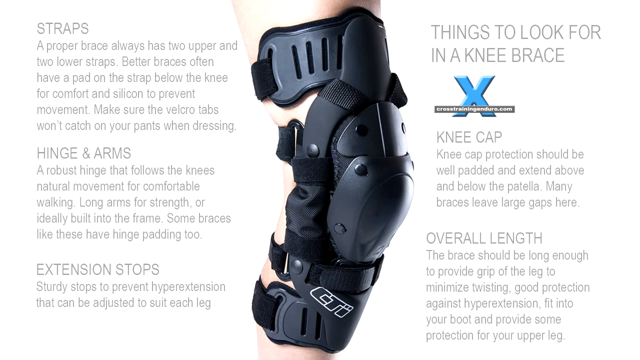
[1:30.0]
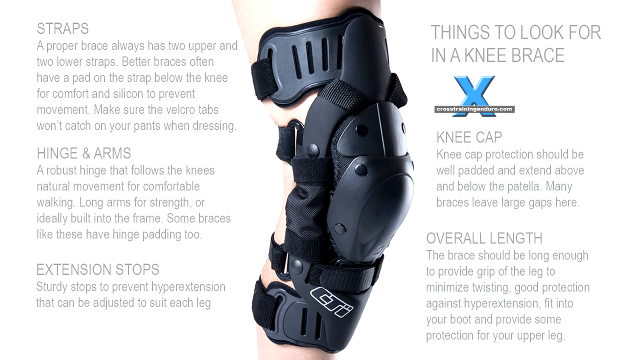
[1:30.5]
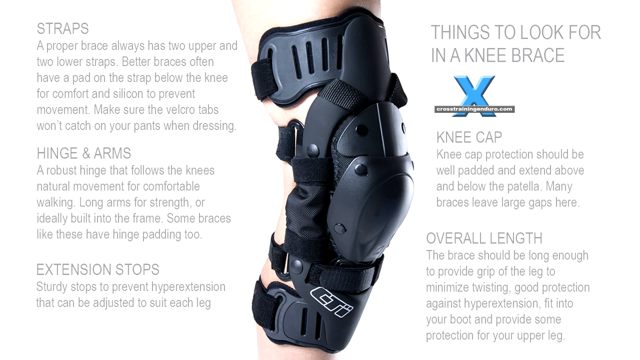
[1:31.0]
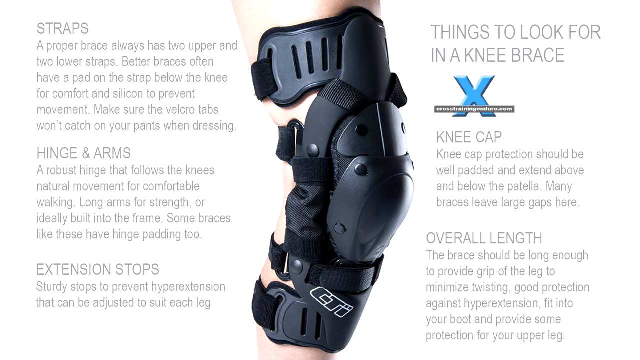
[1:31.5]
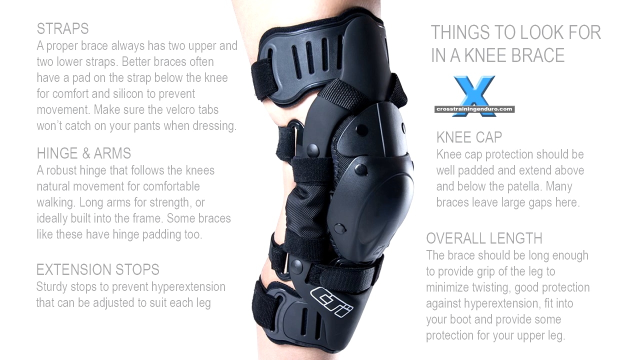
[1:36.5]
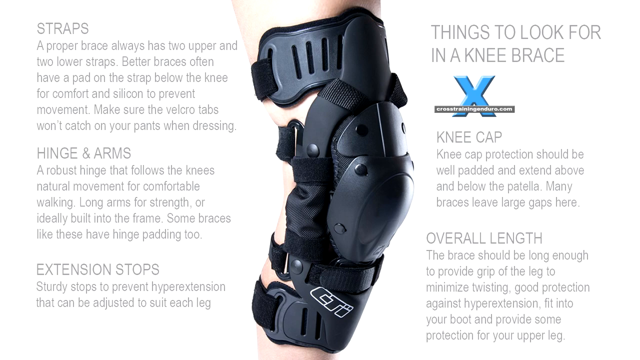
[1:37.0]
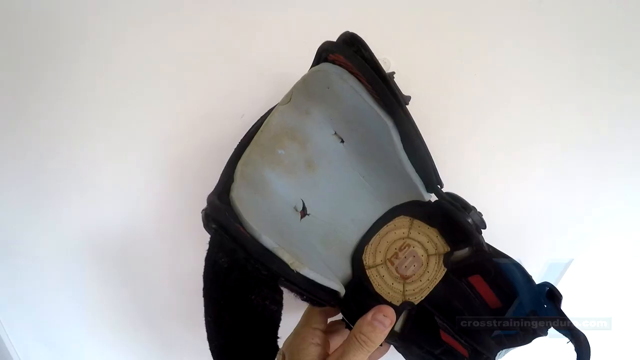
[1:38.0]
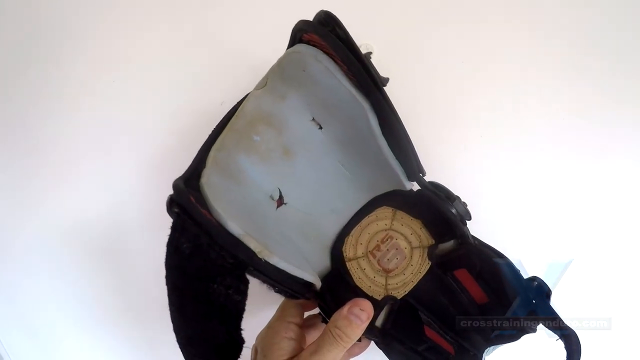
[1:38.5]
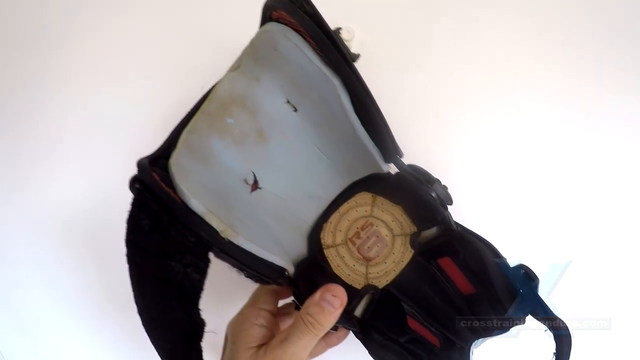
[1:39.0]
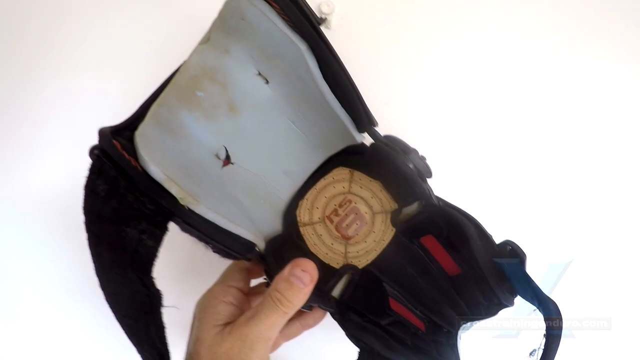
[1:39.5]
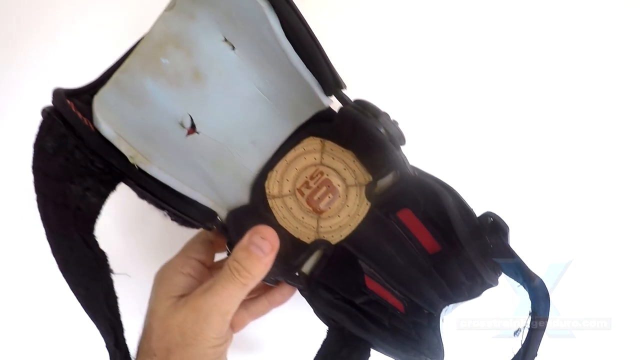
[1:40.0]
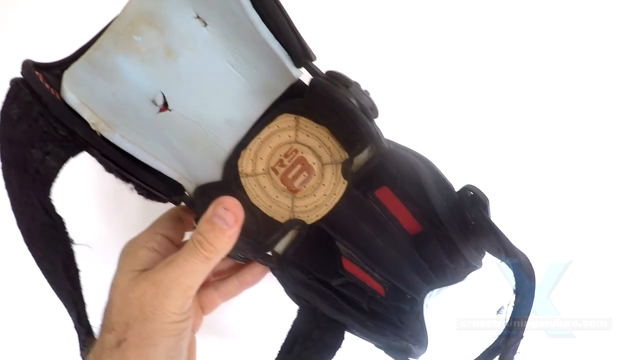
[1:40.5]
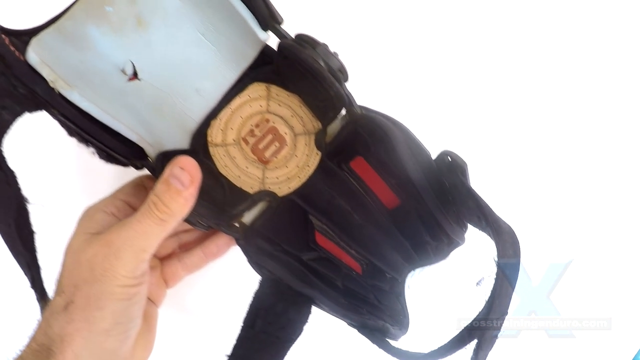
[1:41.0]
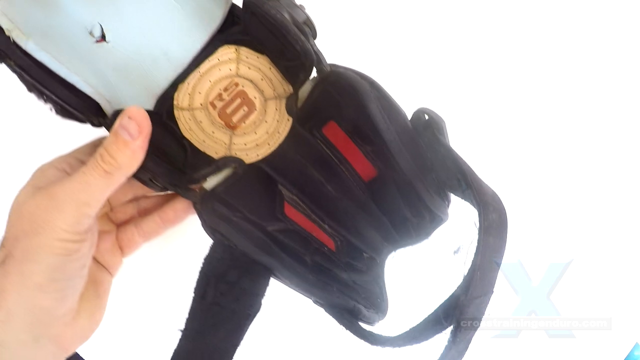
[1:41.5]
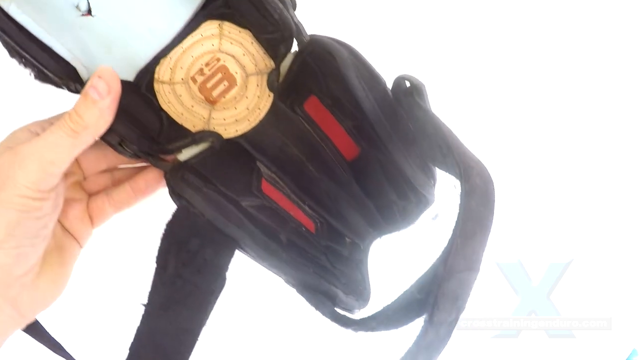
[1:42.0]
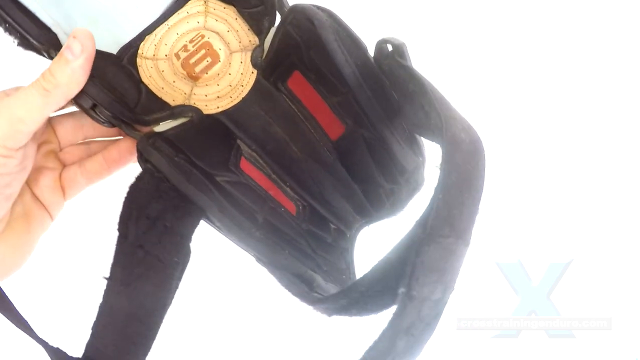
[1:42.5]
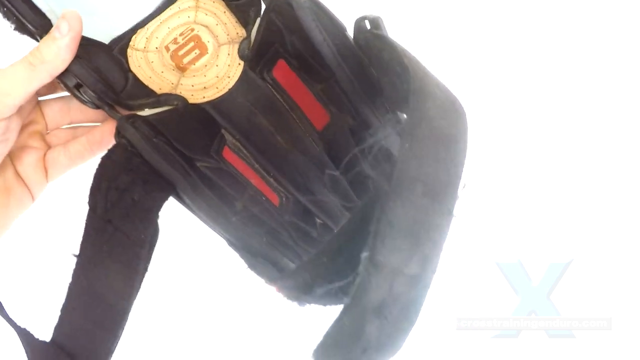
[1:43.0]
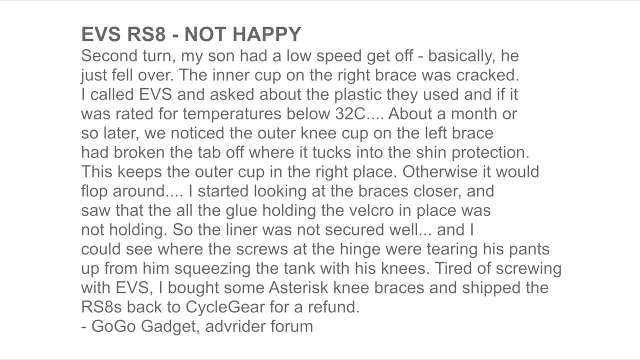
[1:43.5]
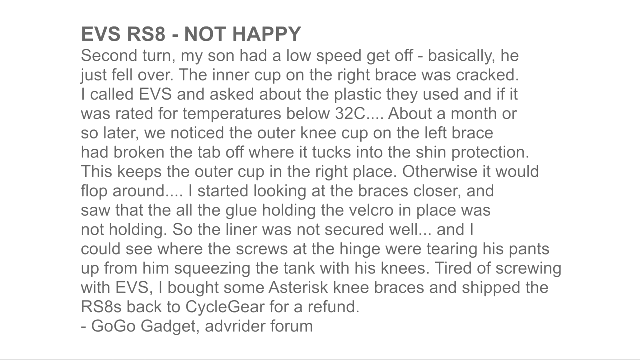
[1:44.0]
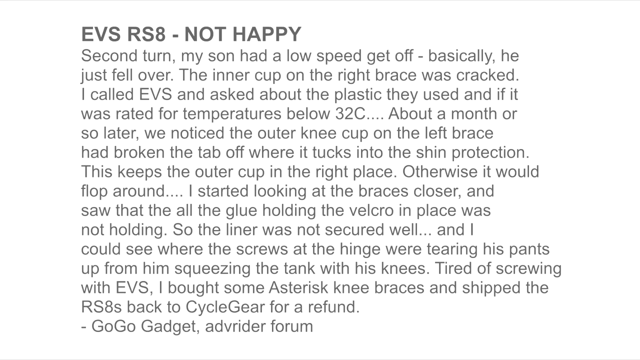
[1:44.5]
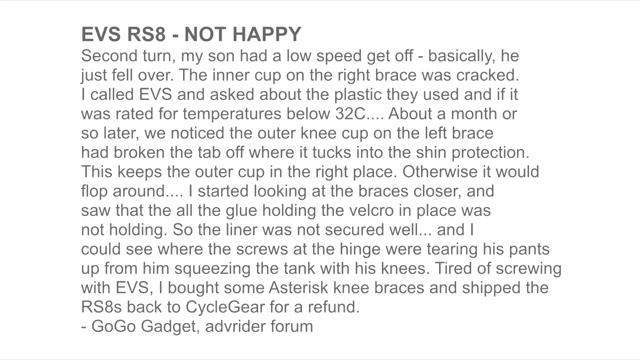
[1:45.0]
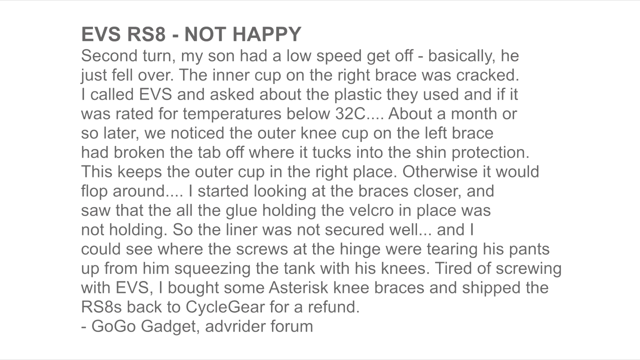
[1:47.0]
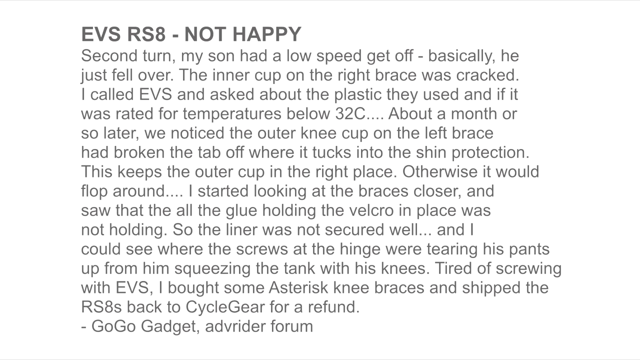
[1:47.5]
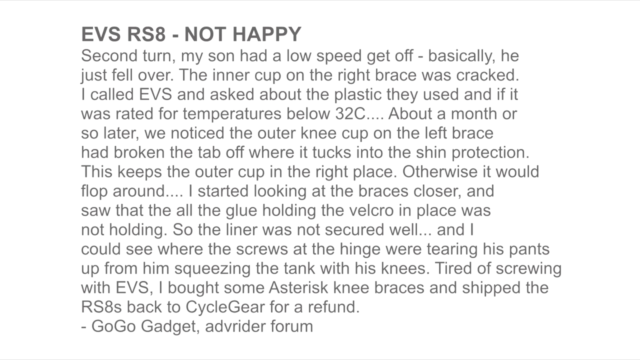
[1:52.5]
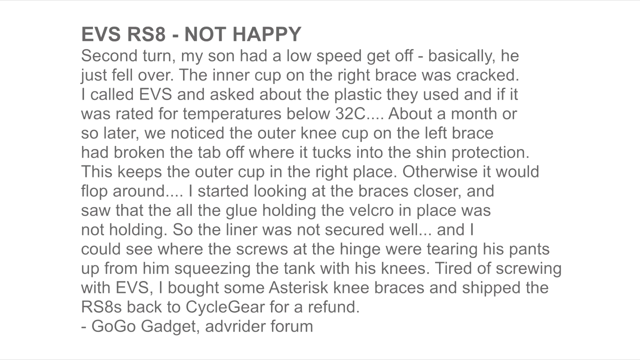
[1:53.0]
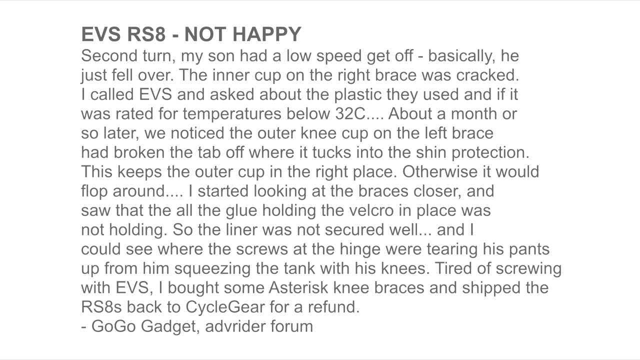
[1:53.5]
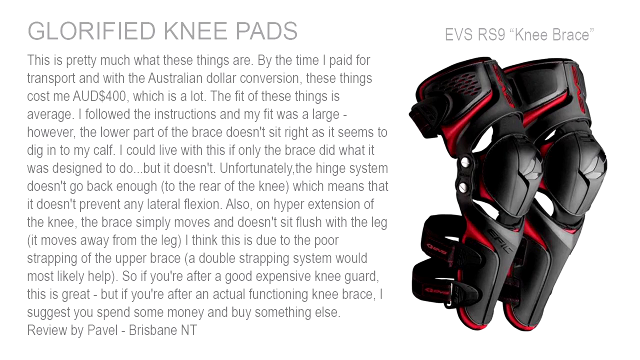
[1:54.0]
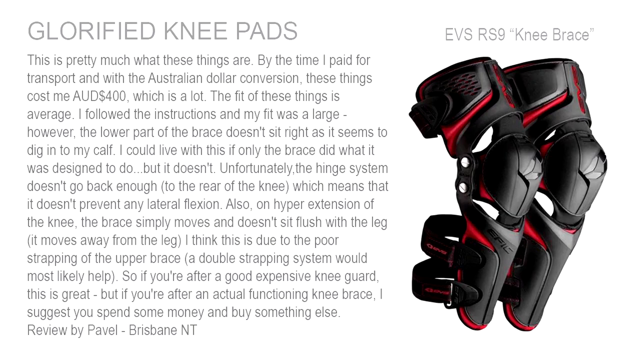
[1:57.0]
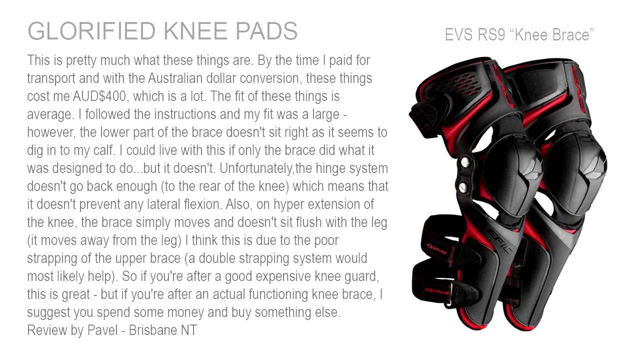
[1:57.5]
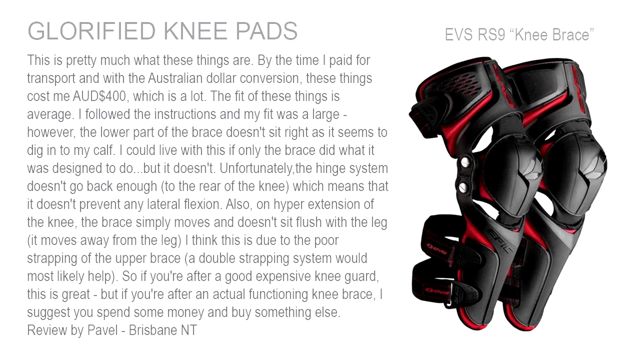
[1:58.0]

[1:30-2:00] Instructions appear on a white background in grey text. The first heading, in capital letters, is "STRAPS", followed by: "a proper brace always has two upper and lower straps. Better braces often have a pad on the strap below the knee for comfort and silicone to prevent movements." Next is "HINGE AND ARMS" in capitals, with text beginning "a robust hinge that follows the knee natural movement for comfortable walking". Then comes "EXTENSION STOPS" in capitals: "sturdy stops to prevent hyperextension that might be adjusted to suit each leg." Next is "KNEECAP" in capitals: "a kneecap protection should be well padded and extended above and below the patella. Many braces leave large gaps here." Finally, an "OVERALL LENGTH" section describes how long the braces should be, ending with "provide some protection for your upper leg."